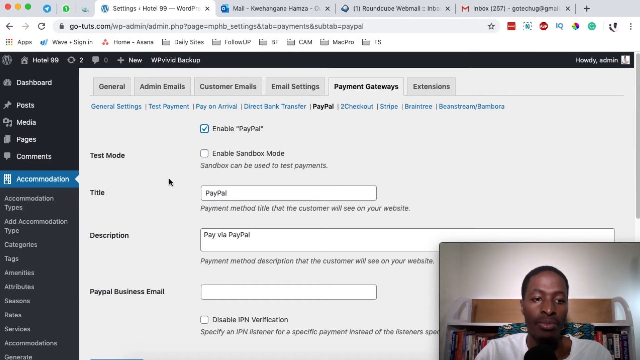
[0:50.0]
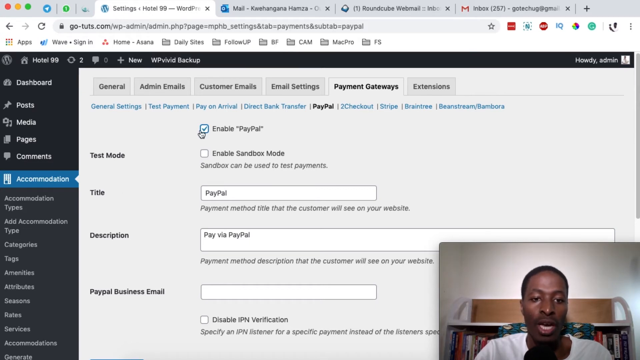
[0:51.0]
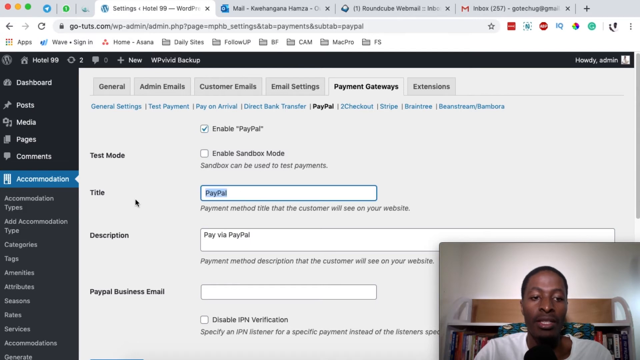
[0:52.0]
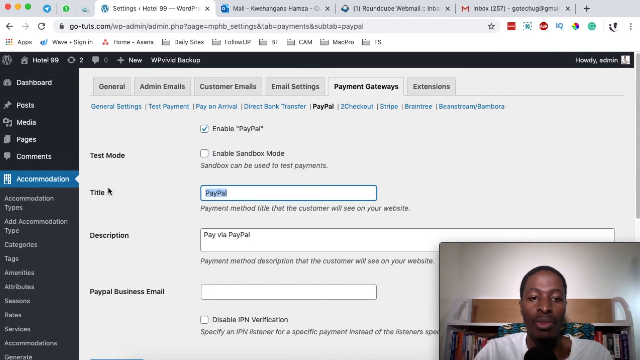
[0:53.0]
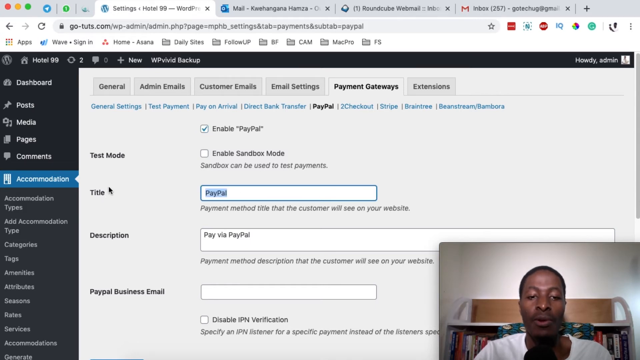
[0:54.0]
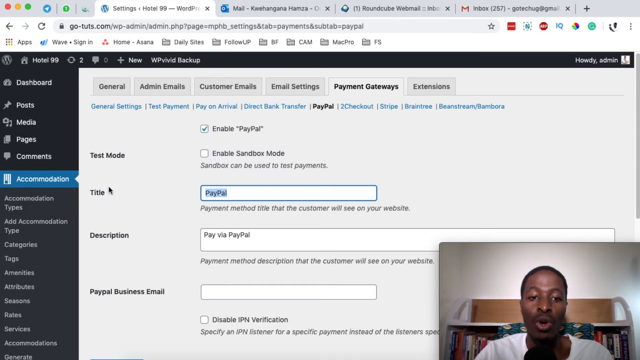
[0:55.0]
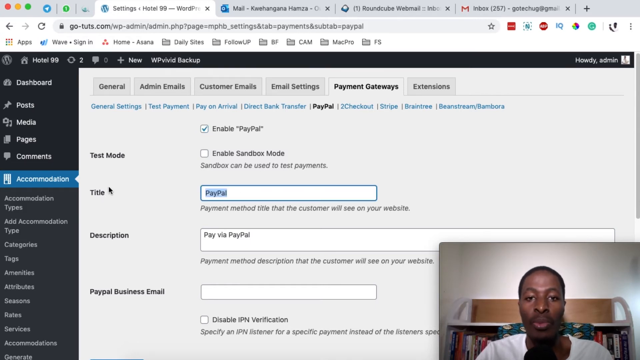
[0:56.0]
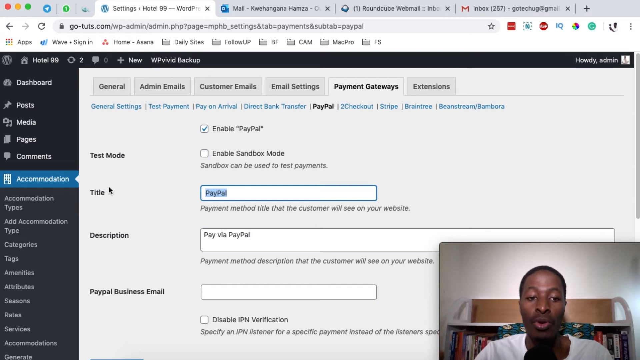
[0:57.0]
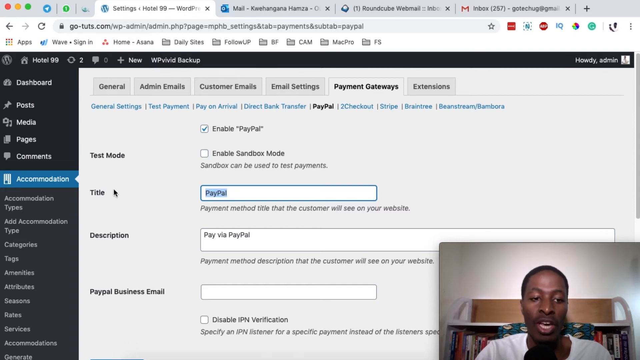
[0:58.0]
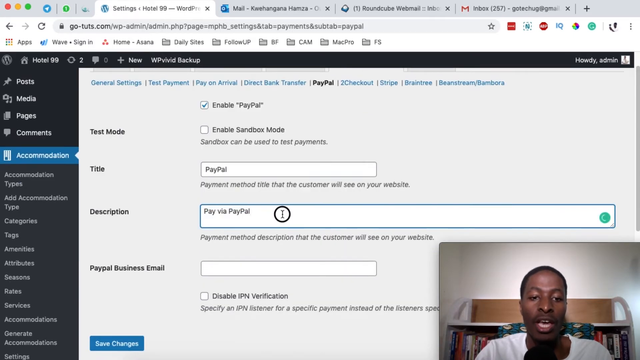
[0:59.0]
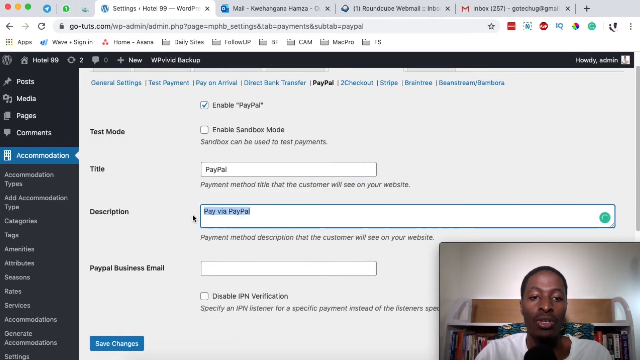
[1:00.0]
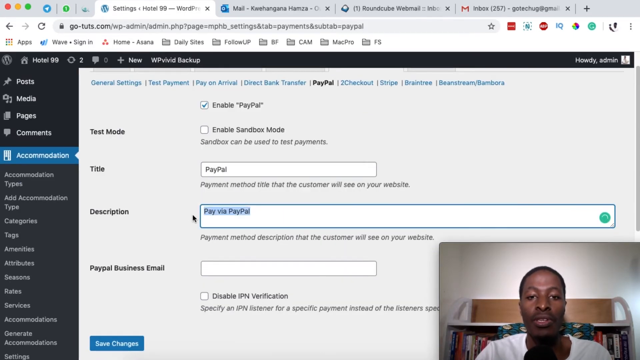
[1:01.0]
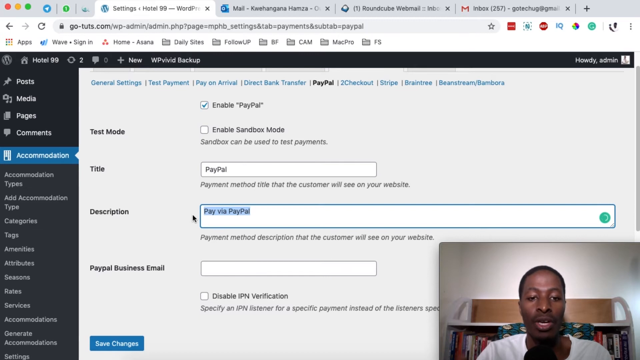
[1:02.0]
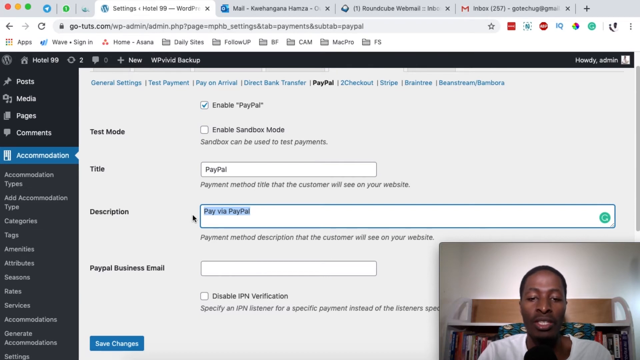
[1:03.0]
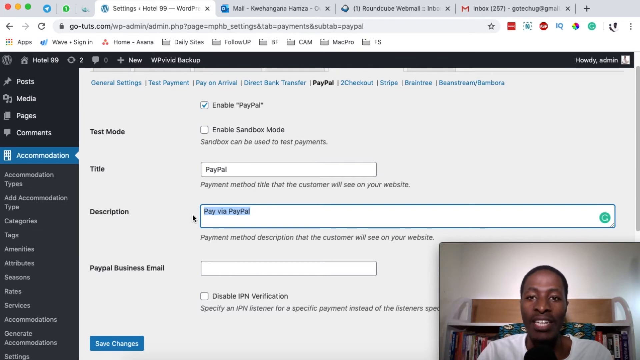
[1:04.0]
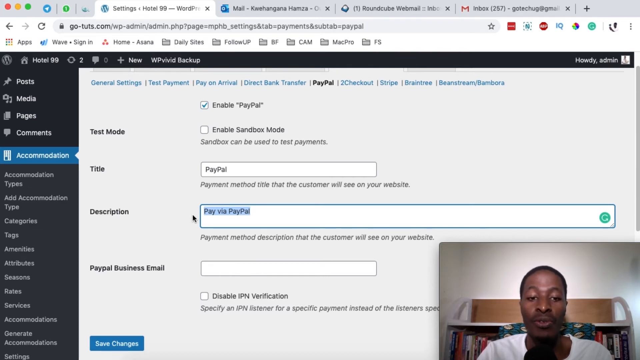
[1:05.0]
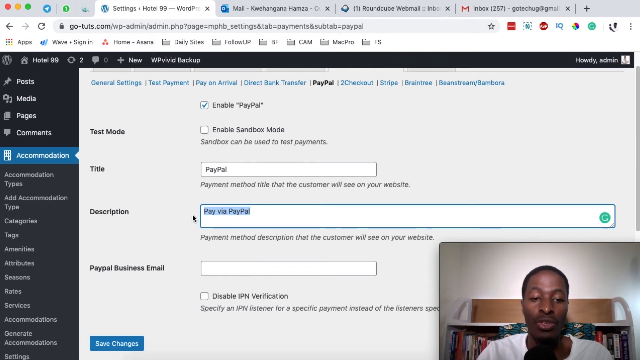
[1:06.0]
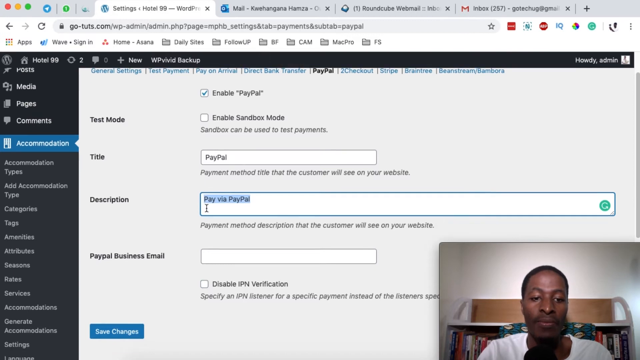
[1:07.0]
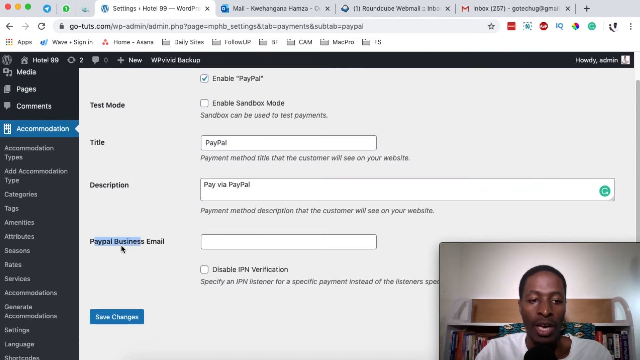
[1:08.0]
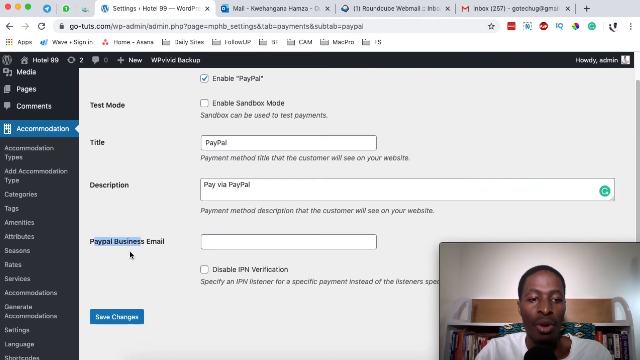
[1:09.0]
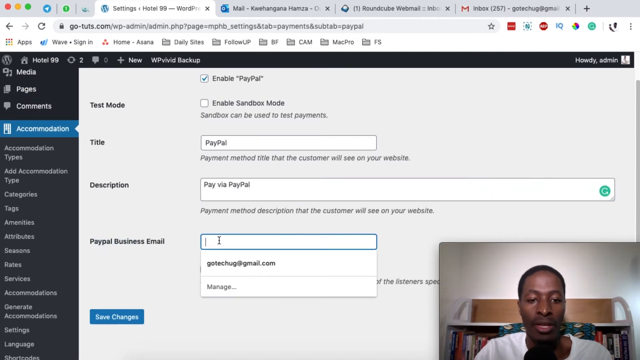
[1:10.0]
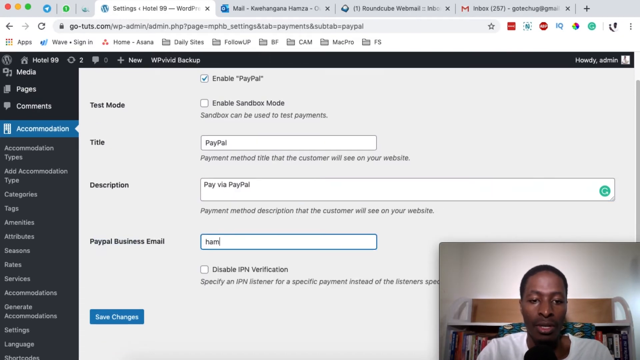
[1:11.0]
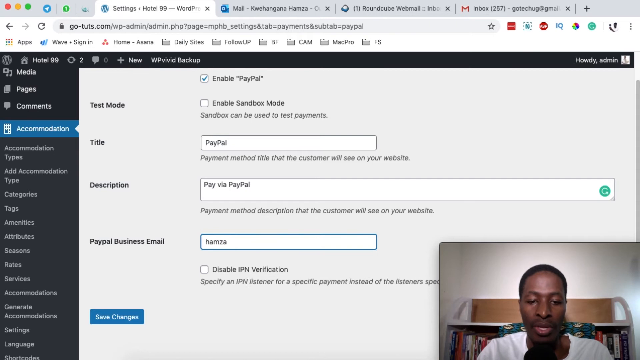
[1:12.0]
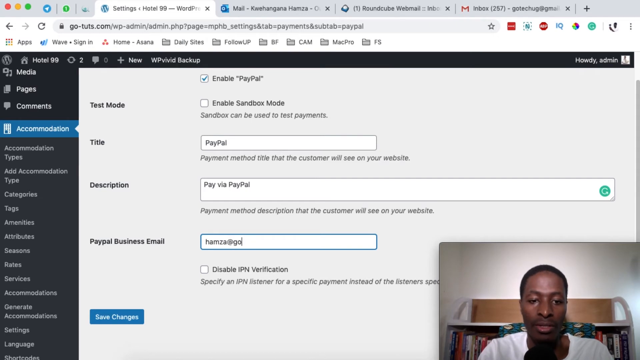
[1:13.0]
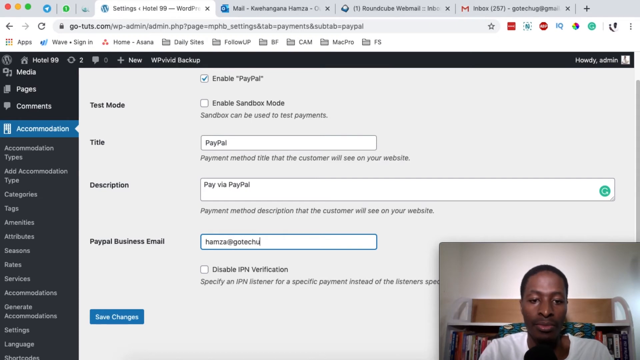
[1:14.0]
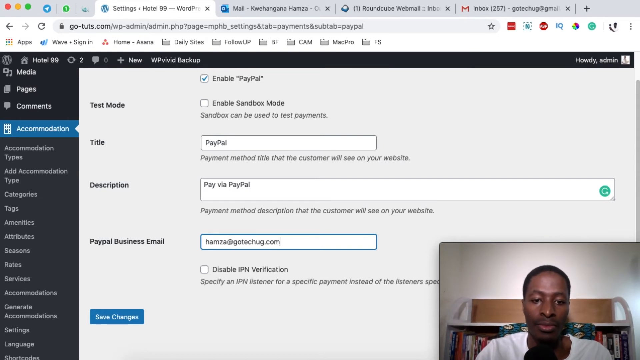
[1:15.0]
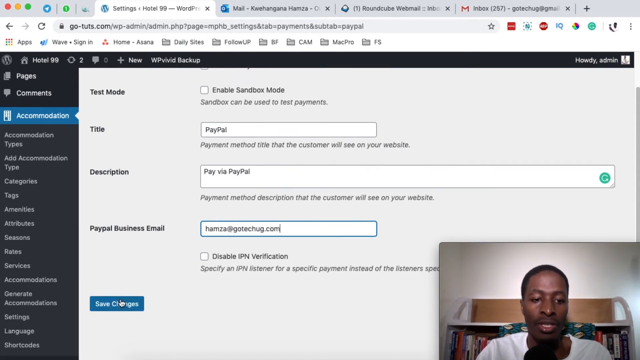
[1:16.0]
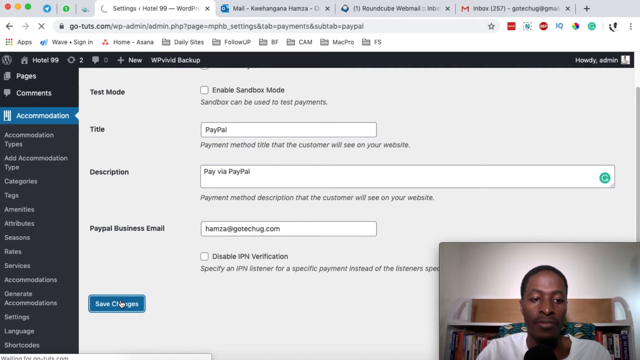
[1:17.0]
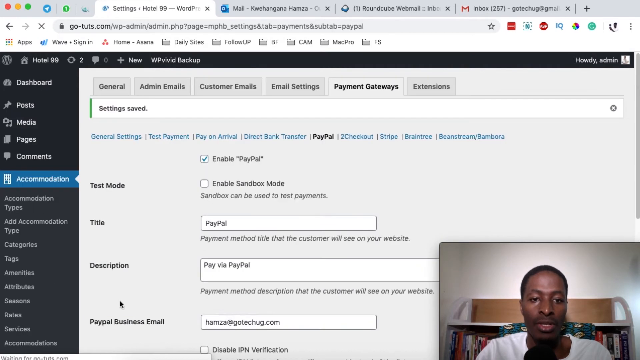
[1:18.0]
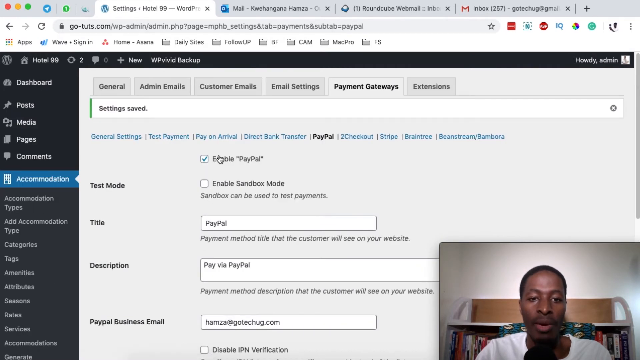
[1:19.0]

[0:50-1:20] On the WordPress website, the accommodation item in the link tree on the left side of the page is selected, then the payment gateways tab, and under it the PayPal link. The box next to enable PayPal is checked. The title field is filled in as "PayPal" and, below it, the description as "paid via PayPal." The PayPal business email is then filled in as "hamza.gov.com," and the Save Changes button is clicked. The person remains on camera in the lower right corner of the screen, talking throughout.